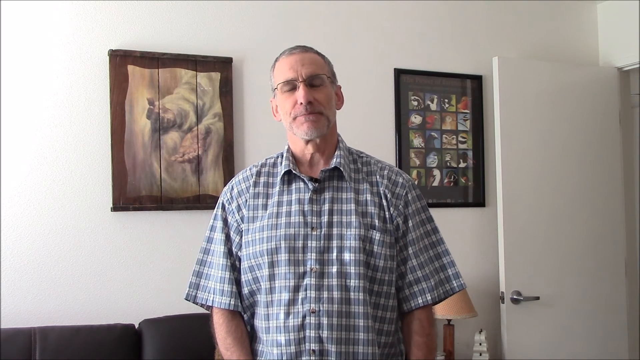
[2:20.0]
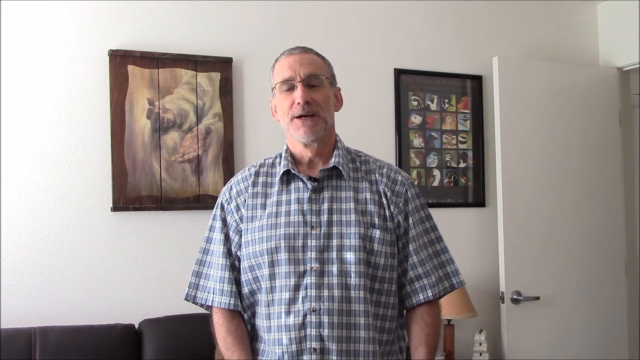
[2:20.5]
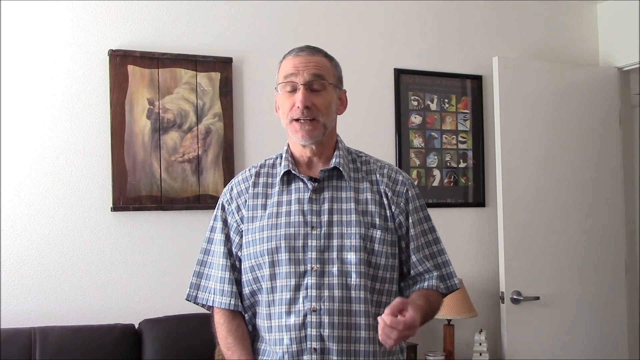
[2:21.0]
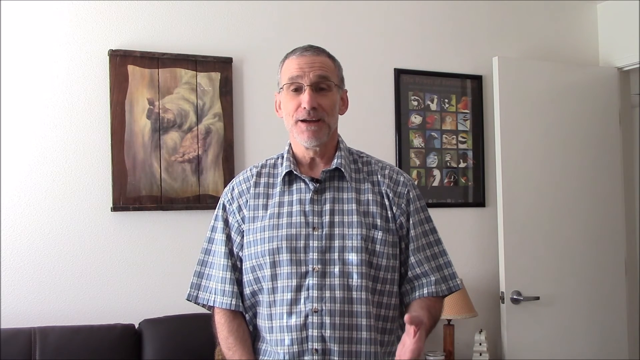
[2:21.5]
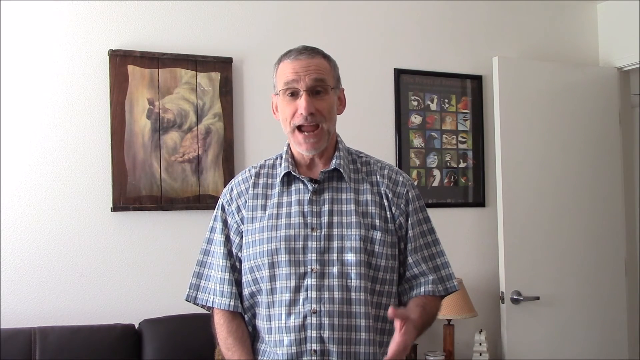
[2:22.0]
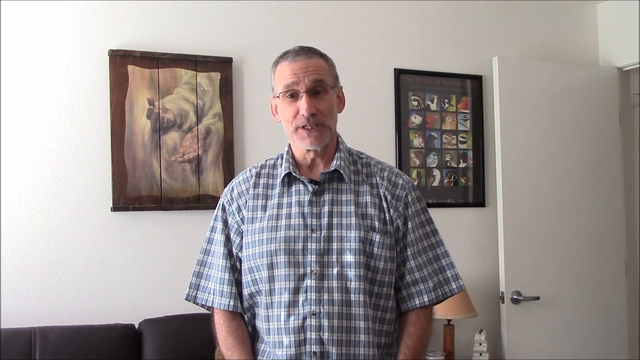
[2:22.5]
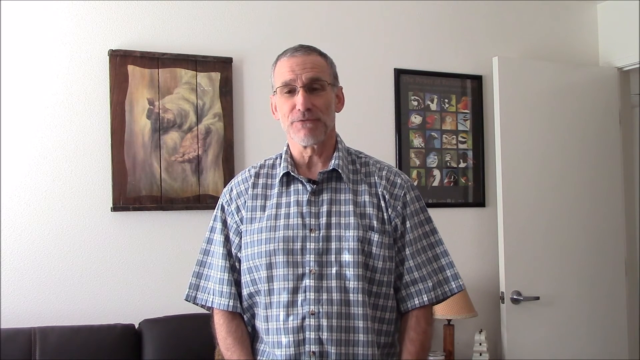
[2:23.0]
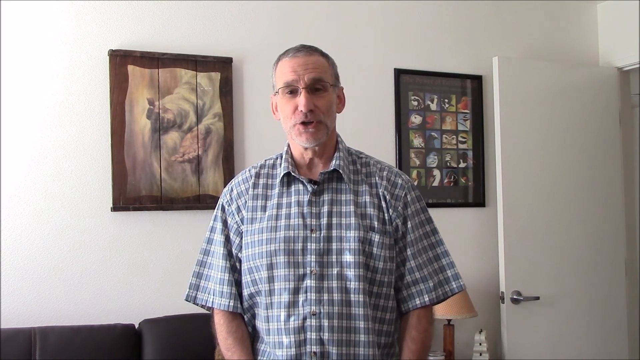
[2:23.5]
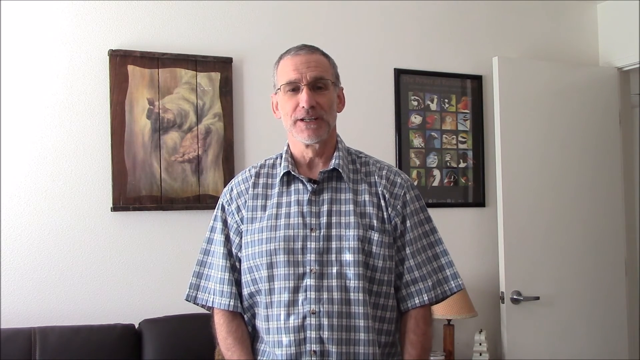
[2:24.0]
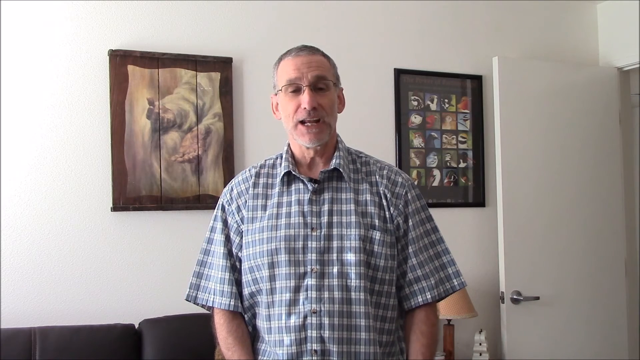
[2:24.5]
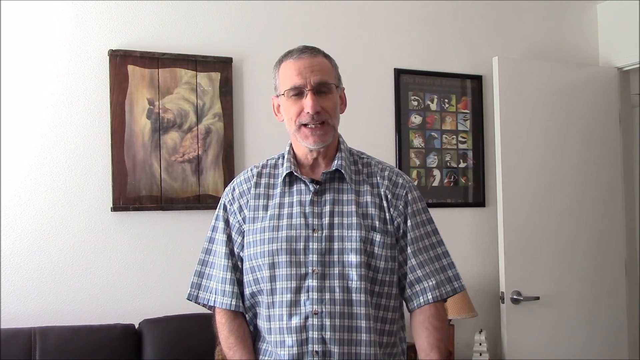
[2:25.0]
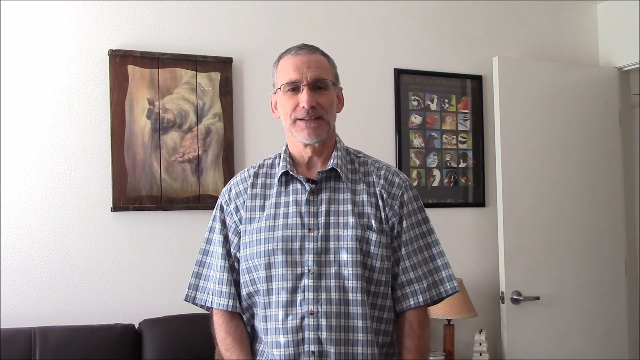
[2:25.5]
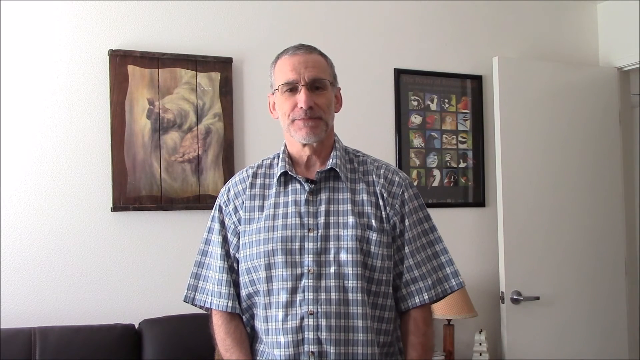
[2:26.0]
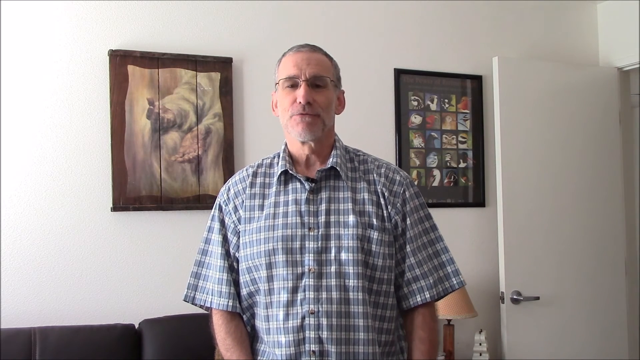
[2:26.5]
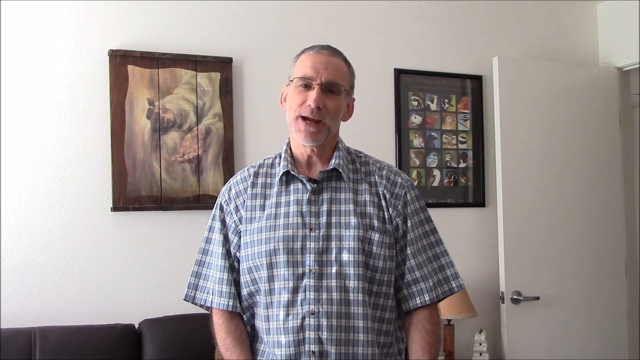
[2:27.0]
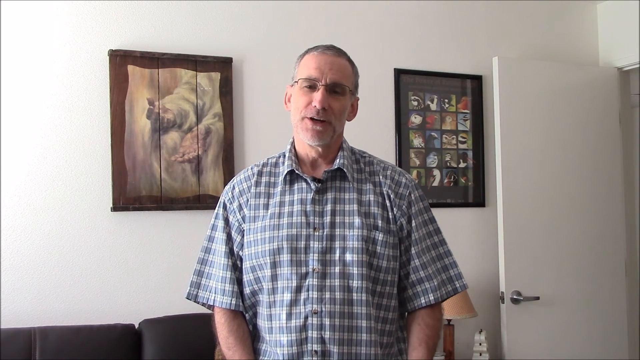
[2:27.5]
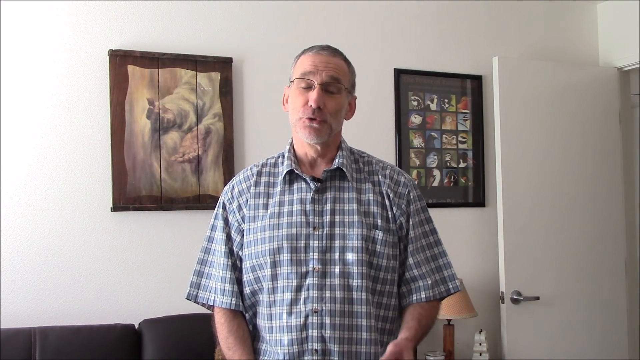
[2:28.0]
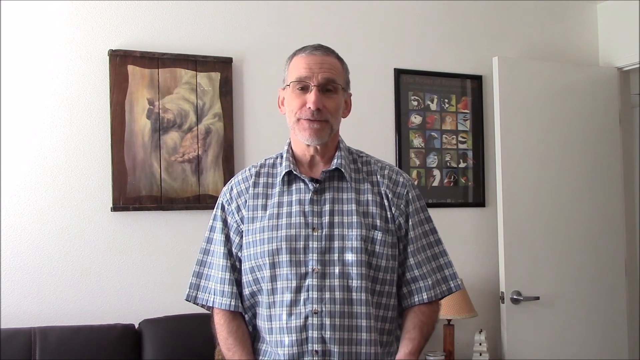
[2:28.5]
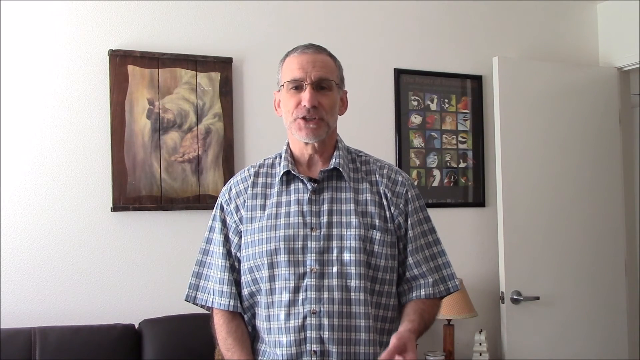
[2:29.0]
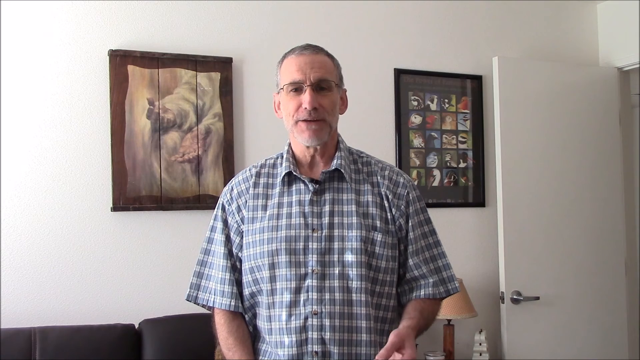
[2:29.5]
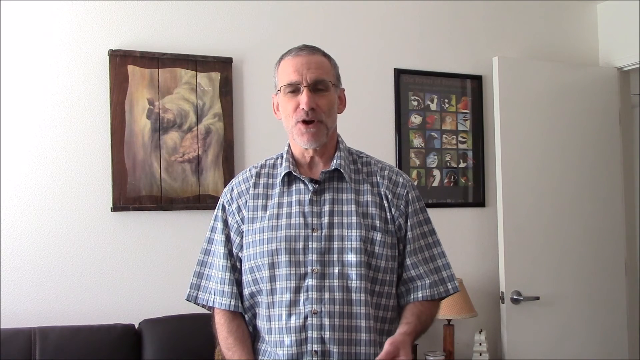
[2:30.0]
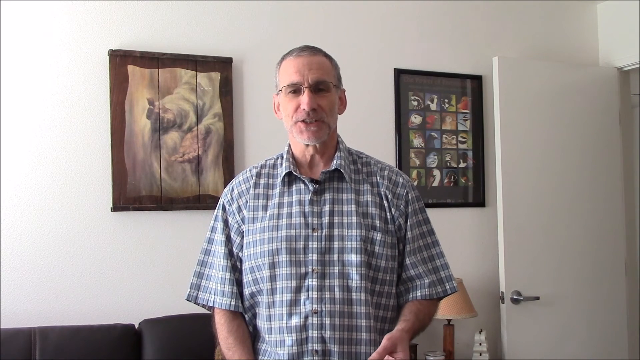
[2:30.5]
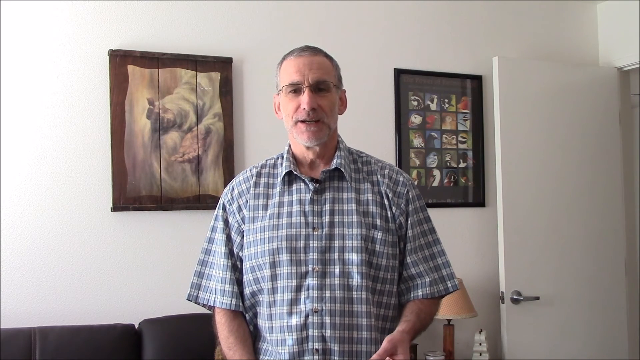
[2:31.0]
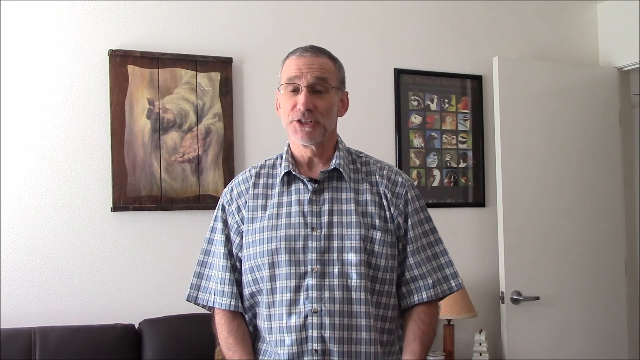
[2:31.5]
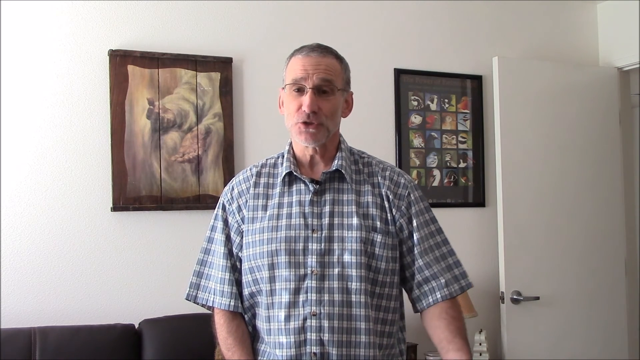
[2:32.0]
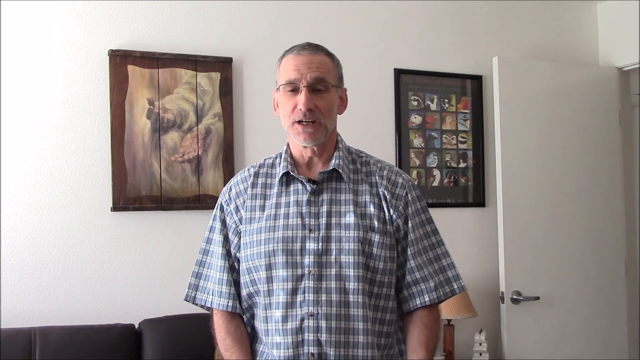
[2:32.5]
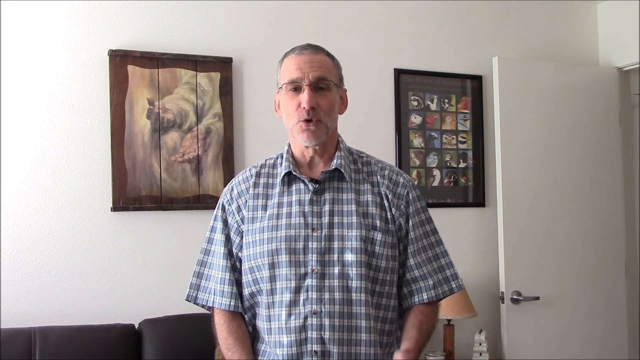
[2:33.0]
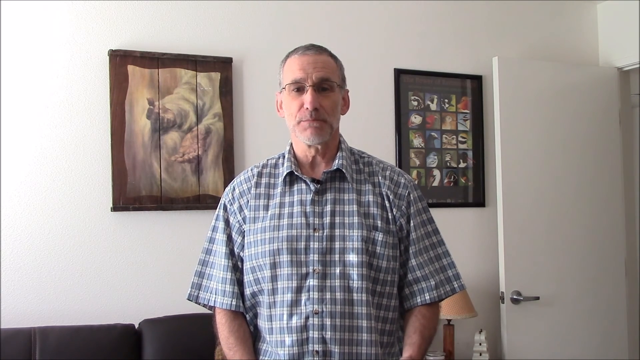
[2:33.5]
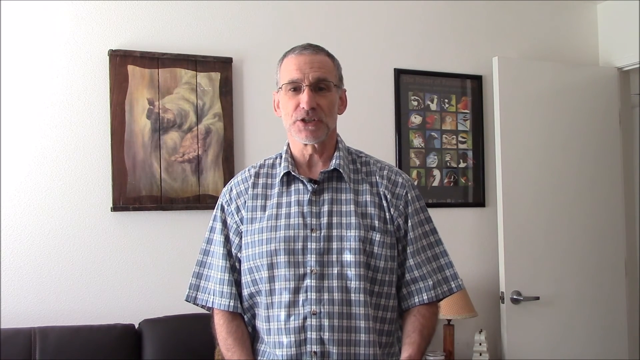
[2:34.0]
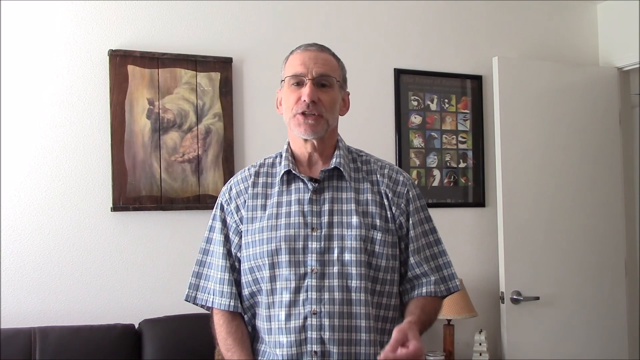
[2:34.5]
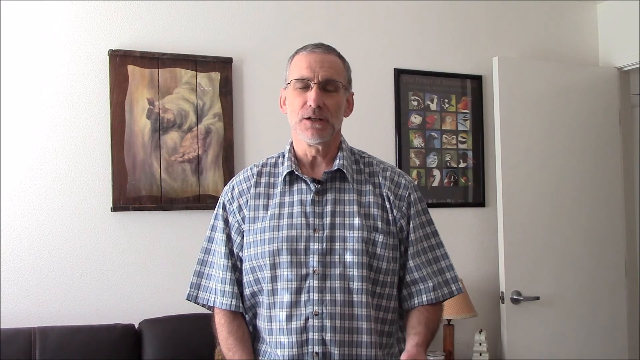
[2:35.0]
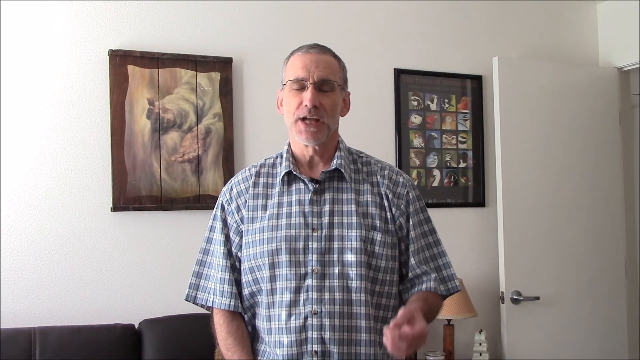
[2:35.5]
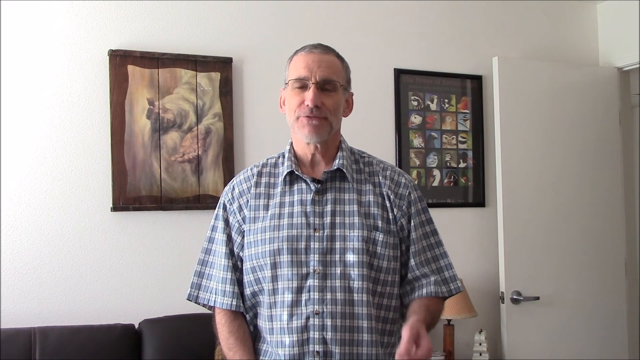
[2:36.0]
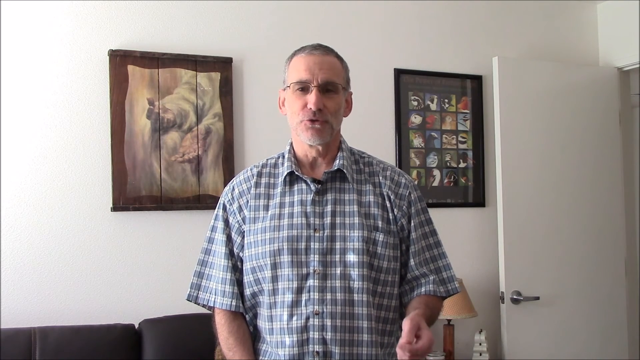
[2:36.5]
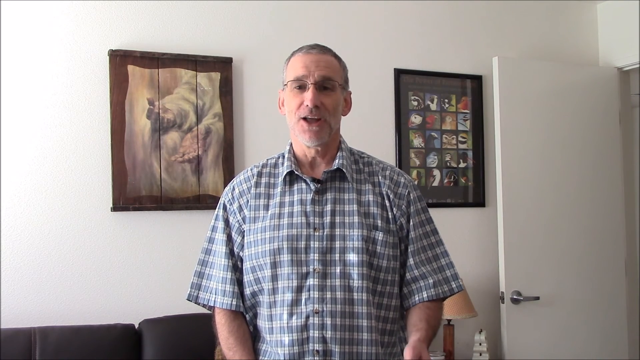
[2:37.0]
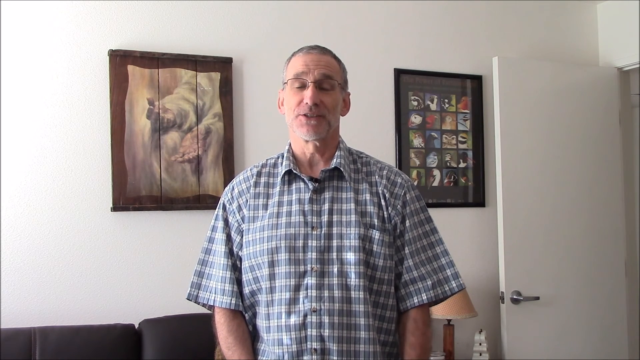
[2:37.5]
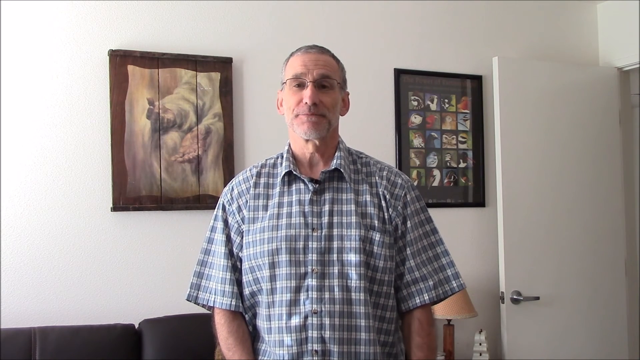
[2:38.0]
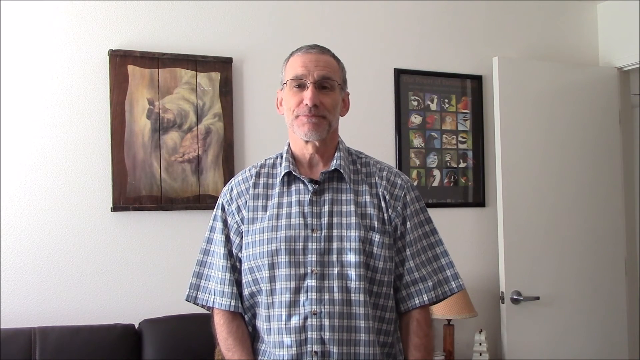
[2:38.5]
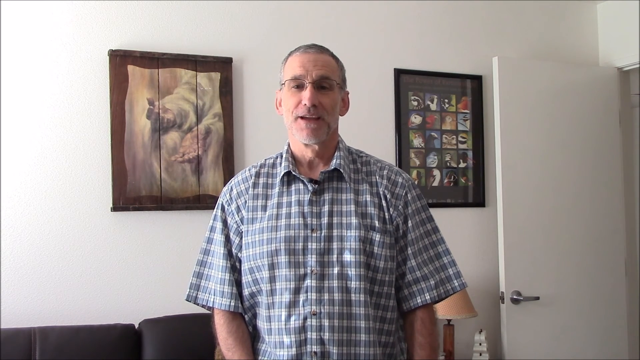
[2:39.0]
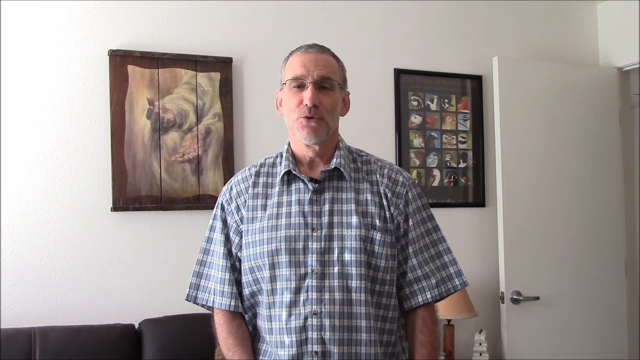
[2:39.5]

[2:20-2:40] The elderly man in the white and gray collared plaid shirt stands in the room with white walls, between the two framed paintings on the wall behind him. He talks directly to the camera and gestures very passionately with his arm on the right side of the screen. The hand on the left side of the screen still isn't moving much and is most likely in the pocket of his pants. He appears to be talking about the poem he just read and seems very pleased, with a slight smile and a warm expression while he speaks.